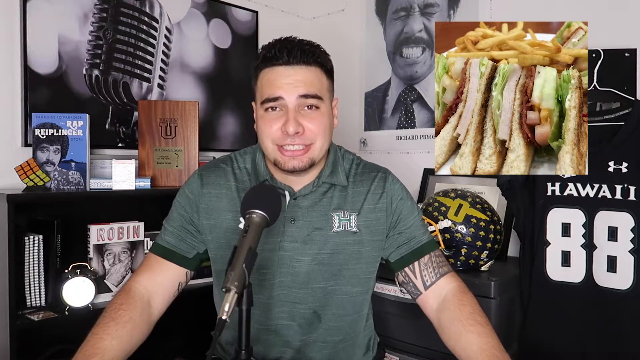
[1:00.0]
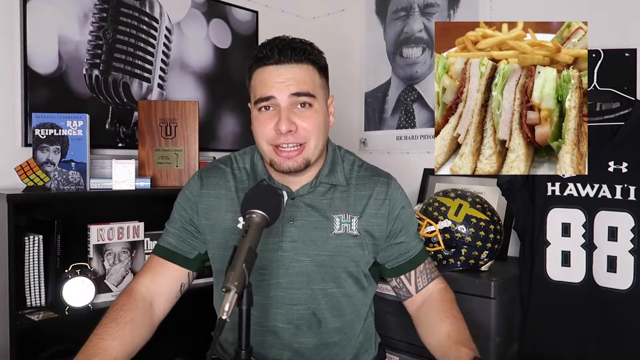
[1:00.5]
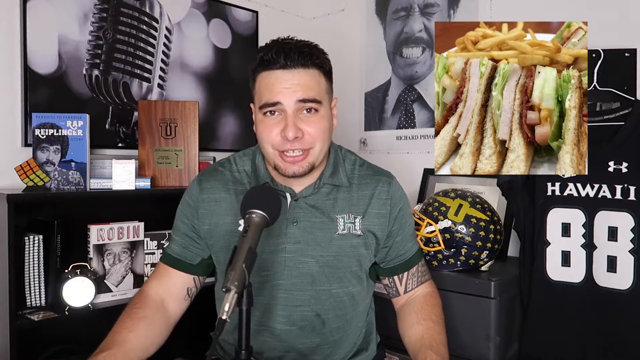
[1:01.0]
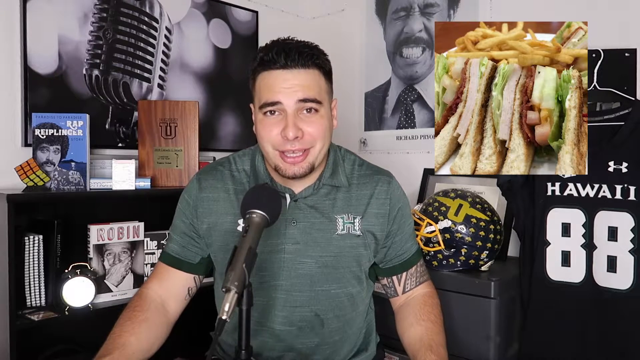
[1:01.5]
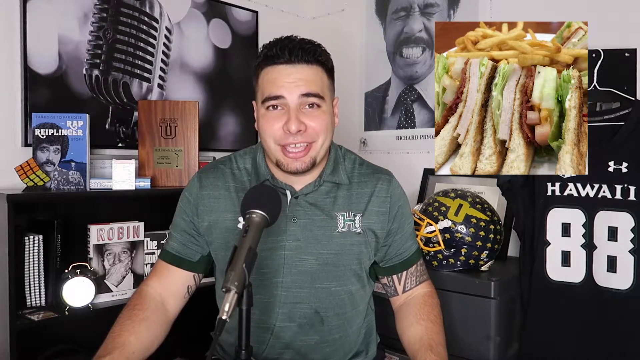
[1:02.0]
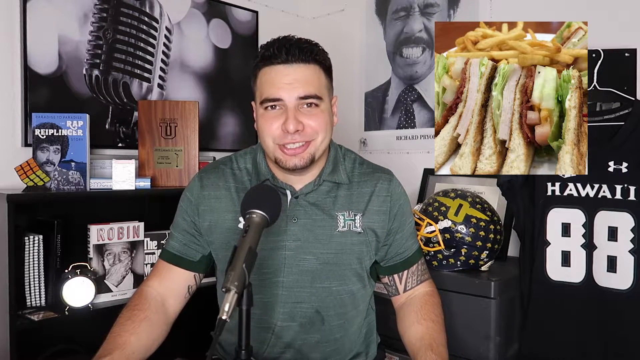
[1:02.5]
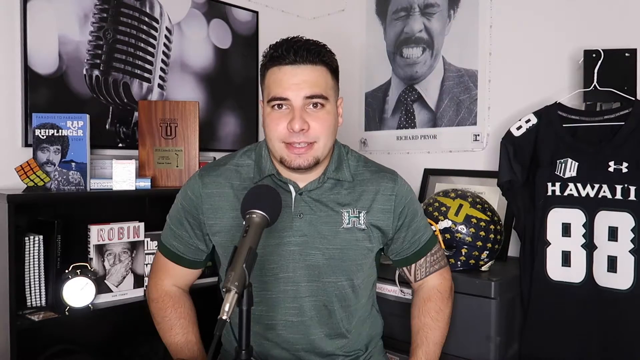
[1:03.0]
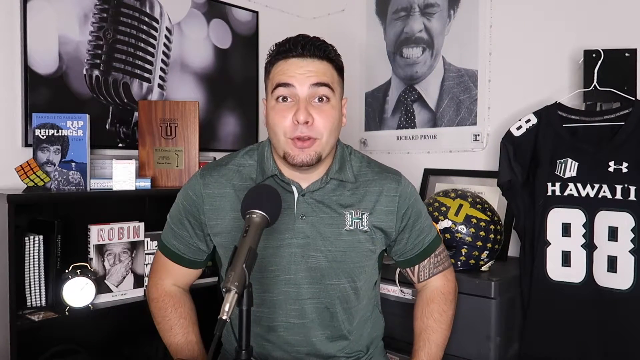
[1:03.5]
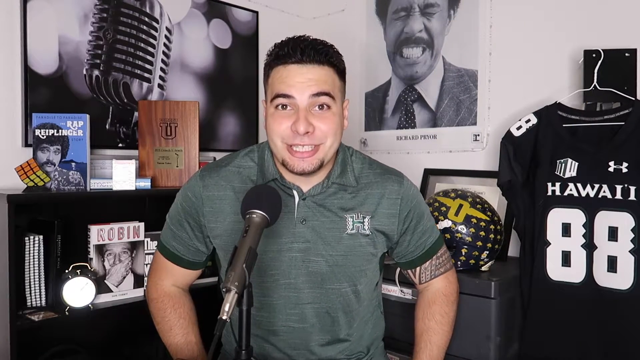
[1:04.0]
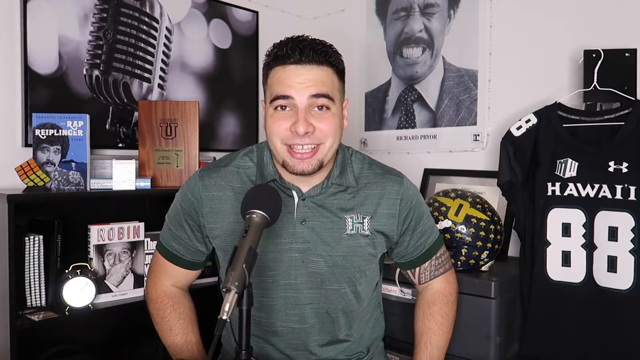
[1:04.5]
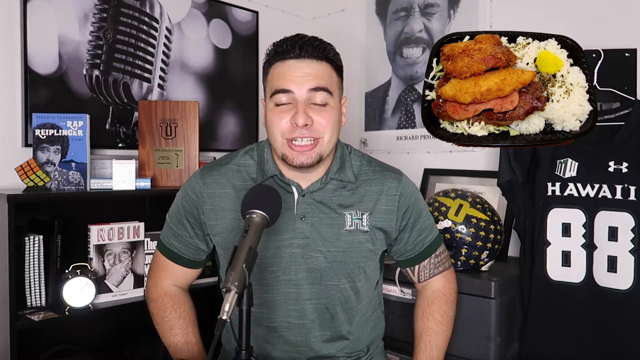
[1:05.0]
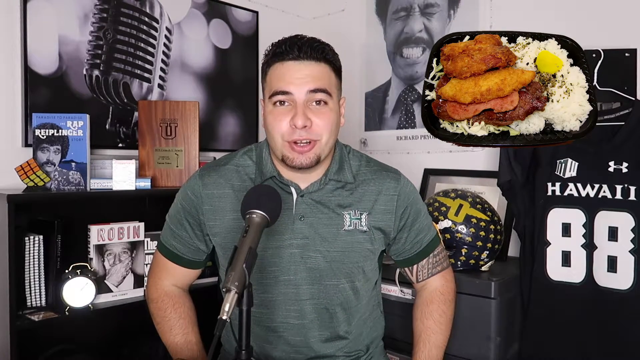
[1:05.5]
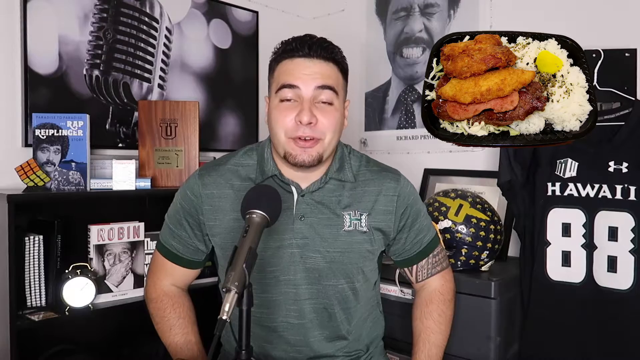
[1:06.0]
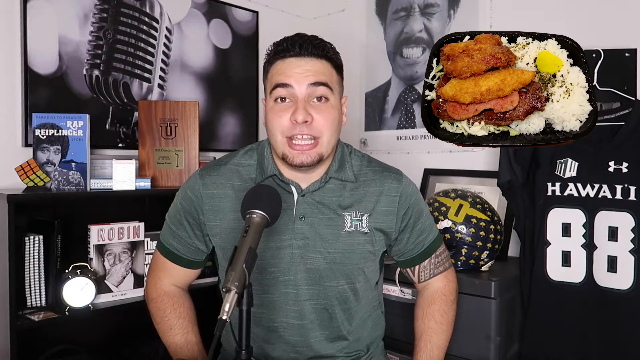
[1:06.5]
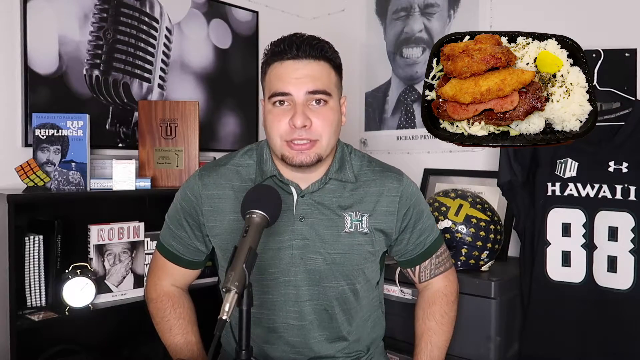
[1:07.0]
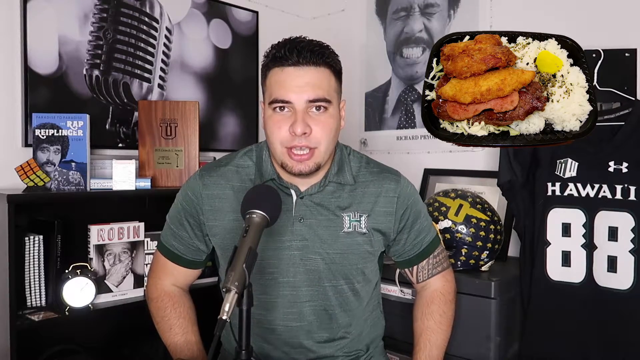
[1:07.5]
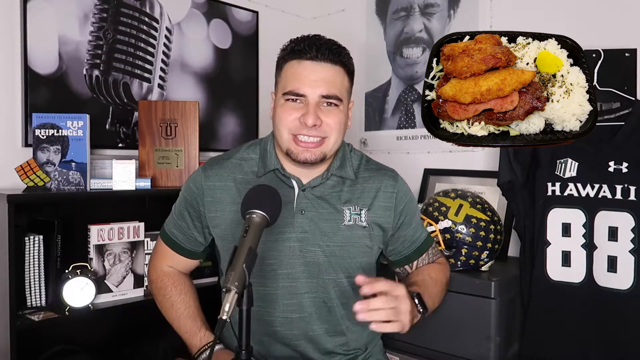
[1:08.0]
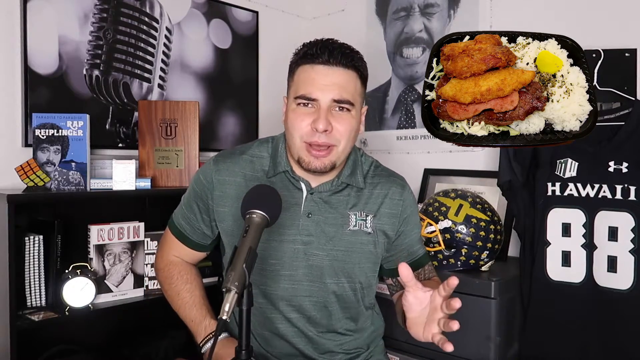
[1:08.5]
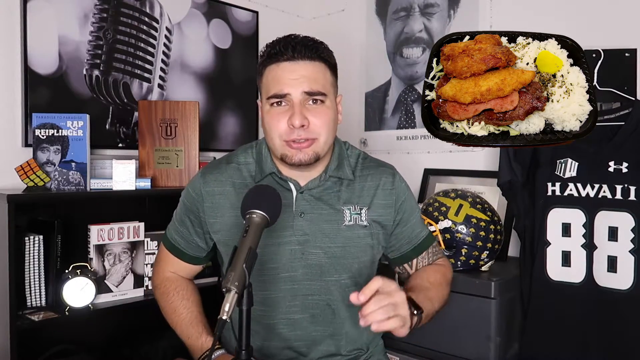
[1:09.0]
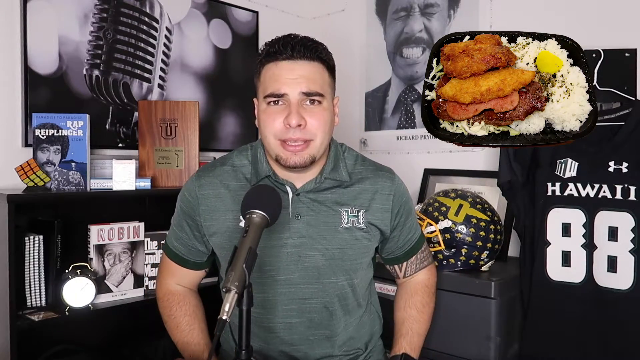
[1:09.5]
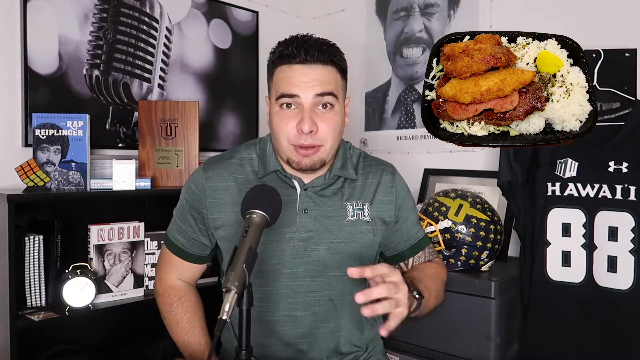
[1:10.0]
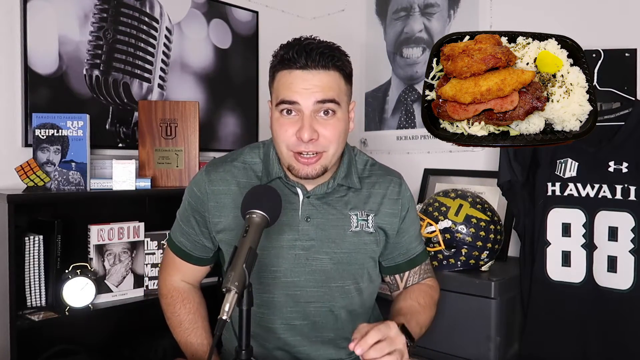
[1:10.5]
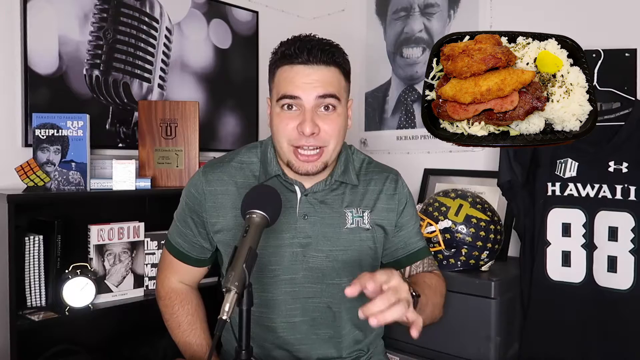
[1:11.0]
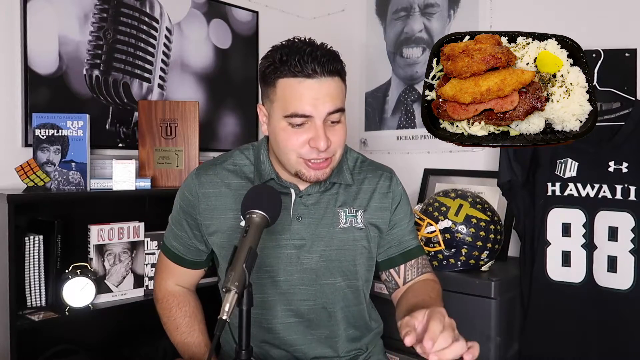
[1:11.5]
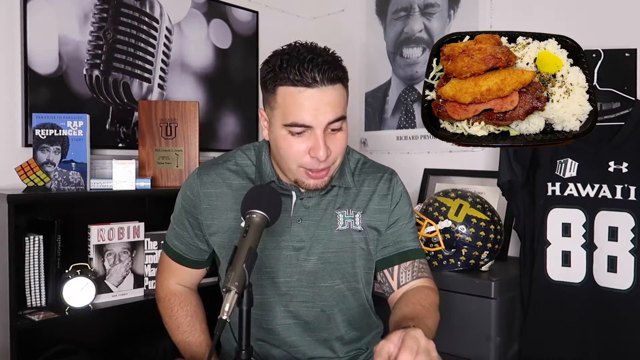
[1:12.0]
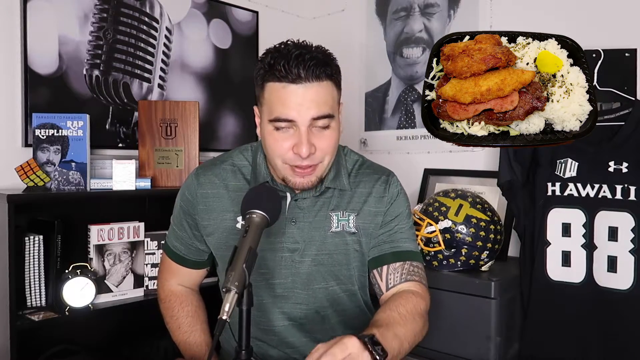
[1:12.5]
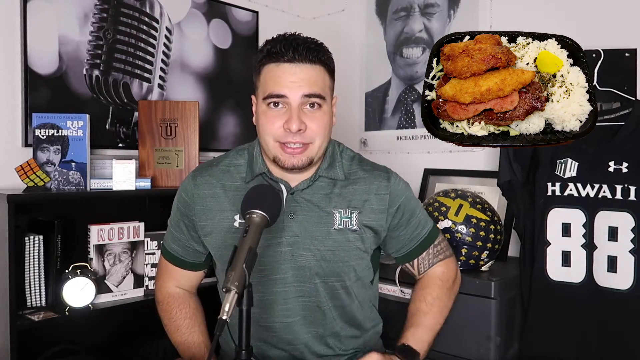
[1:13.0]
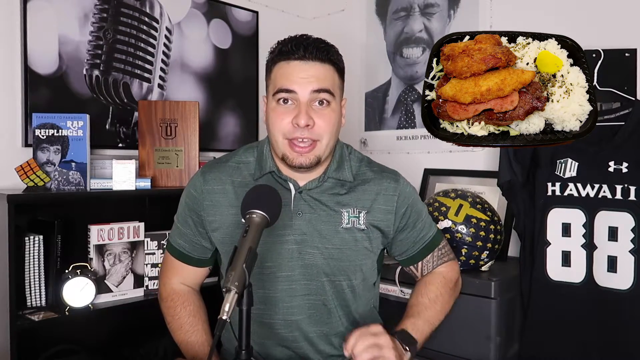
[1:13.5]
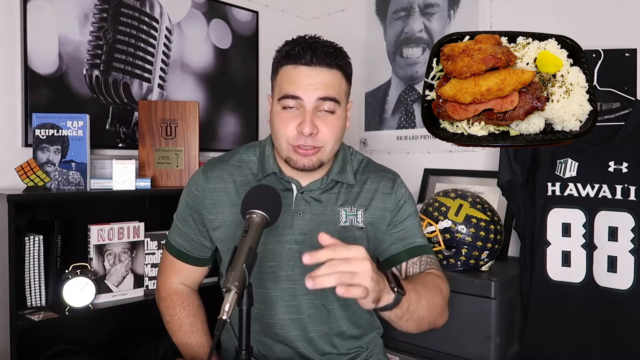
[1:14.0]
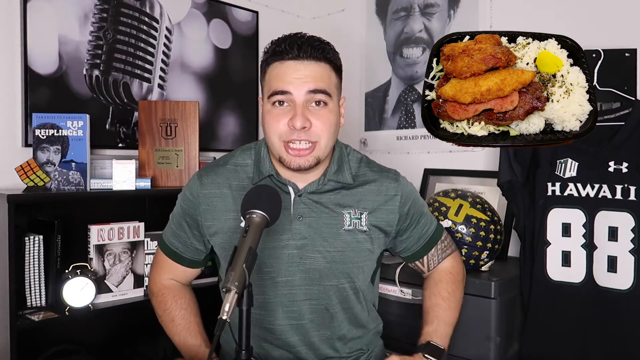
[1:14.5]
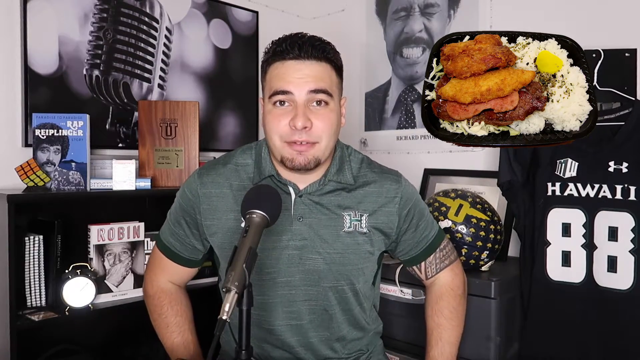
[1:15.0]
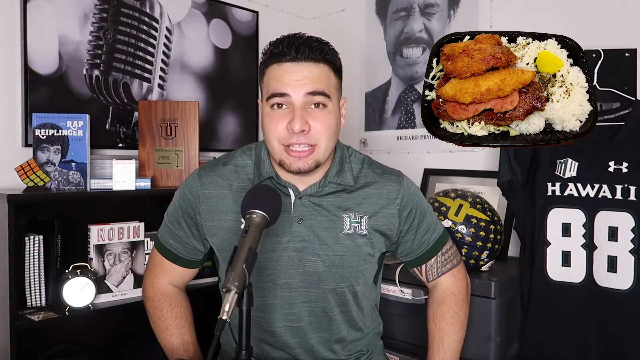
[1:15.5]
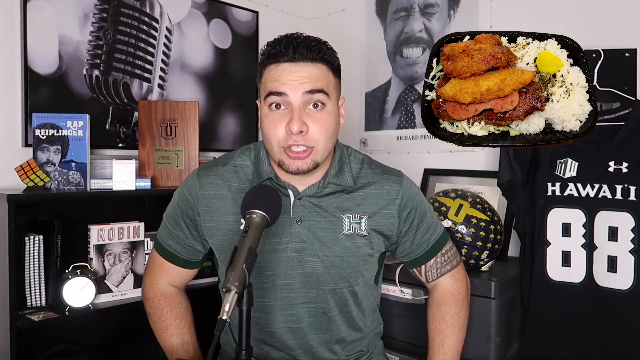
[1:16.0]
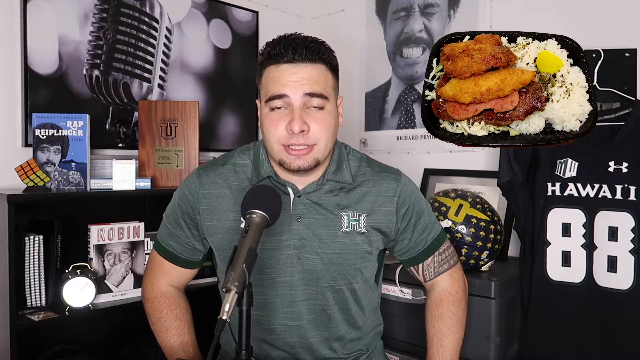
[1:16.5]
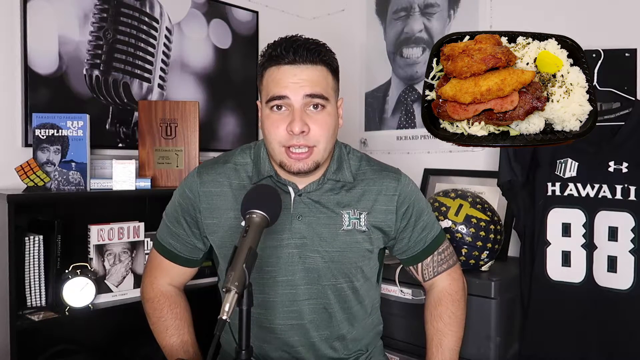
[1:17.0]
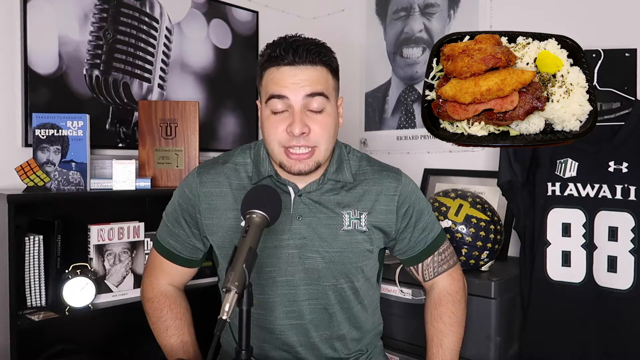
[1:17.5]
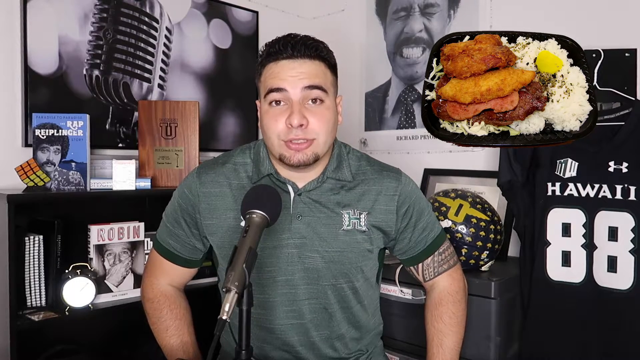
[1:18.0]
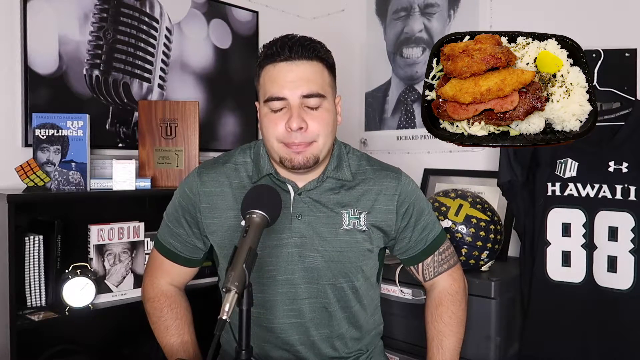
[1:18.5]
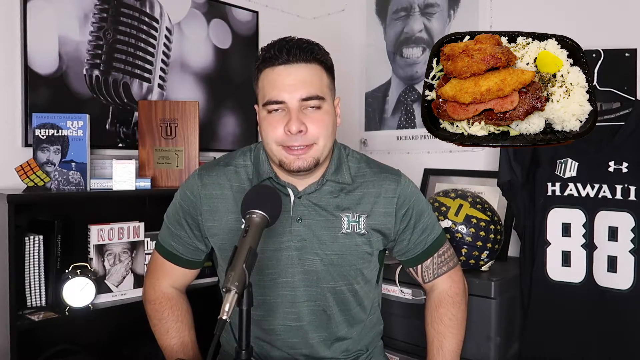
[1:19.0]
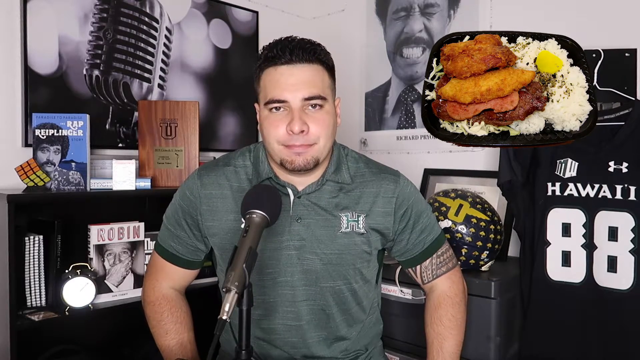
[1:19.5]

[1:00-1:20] The man in the green shirt with the H on it and gelled-up black hair is in his room as an image of sandwiches is shown at the top right. The sandwiches appear to be cut into triangles and contain lettuce, some sort of processed meat and possibly cheese, though the resolution of the photo makes it hard to tell. On the same plate, at the back, is a large selection of french-fry-style chips that appear to be beer-battered. The image disappears, the man raises his hands to his hips, and then an image of a different meal appears at the top right: a bed of rice with a yellow item at its top right, and what appears to be a pork cutlet, a chicken cutlet, a beef cutlet and a piece of bacon, all on top of the rice. The man tilts a little to the right with his eyebrows furrowed and his hand in the air in a kind of 'maybe' expression, seeming a little unsure of this dish compared to the previous ones, yet he seems excited, pointing down several times as if to illustrate a point. He then continues talking to the camera in a less animated way, looking semi-serious; this meal may not have pleased him as much as the others.